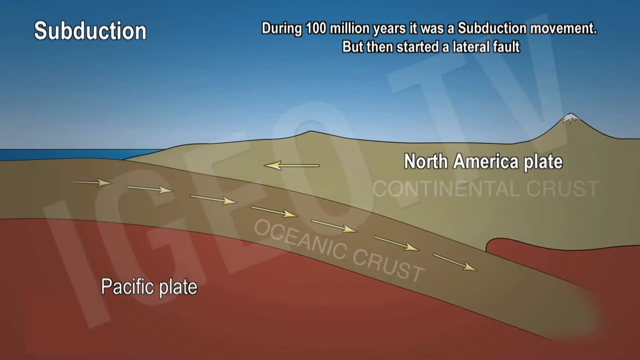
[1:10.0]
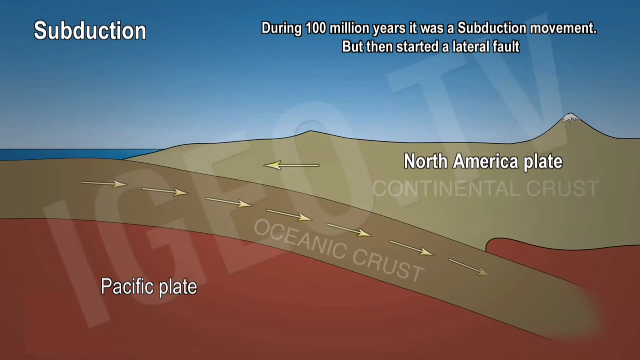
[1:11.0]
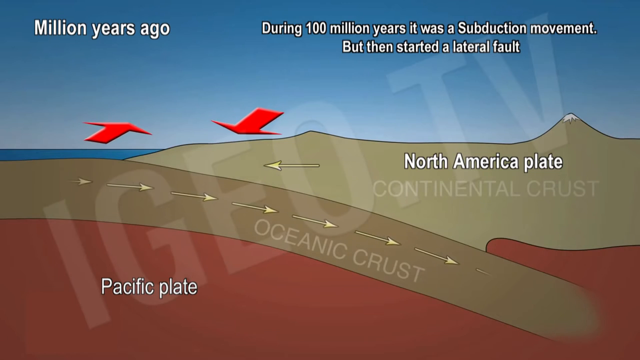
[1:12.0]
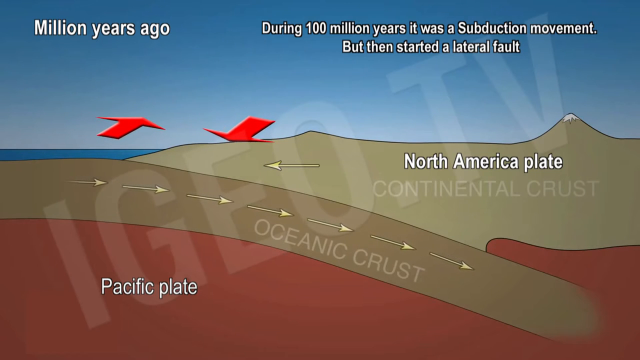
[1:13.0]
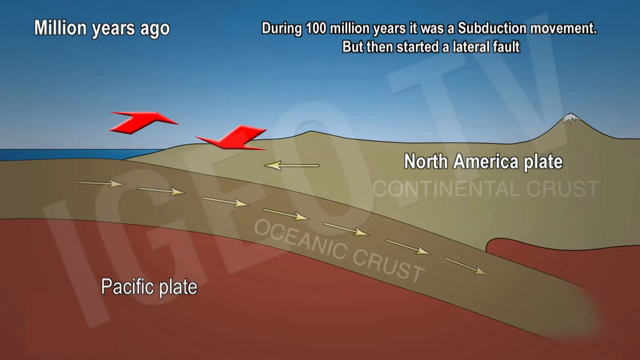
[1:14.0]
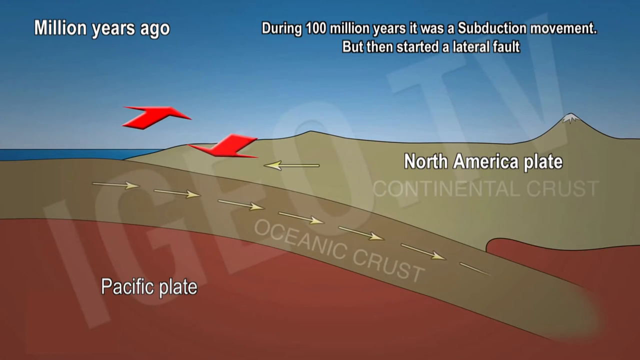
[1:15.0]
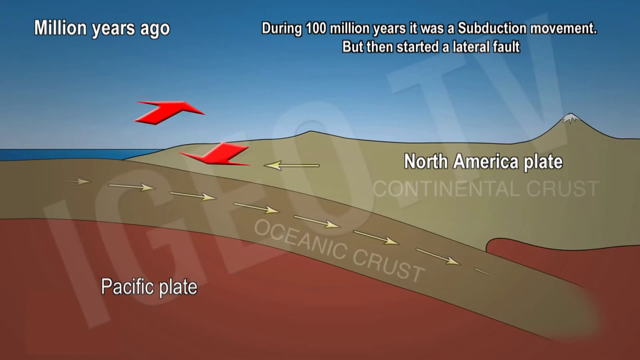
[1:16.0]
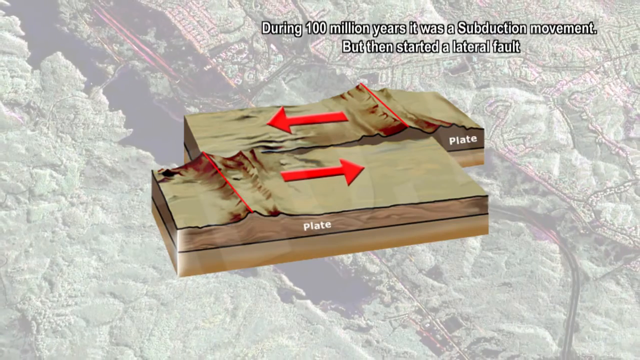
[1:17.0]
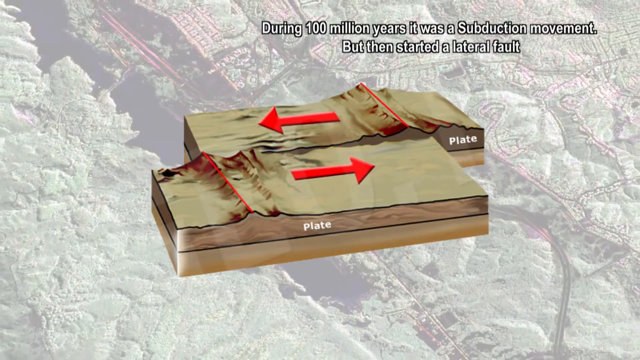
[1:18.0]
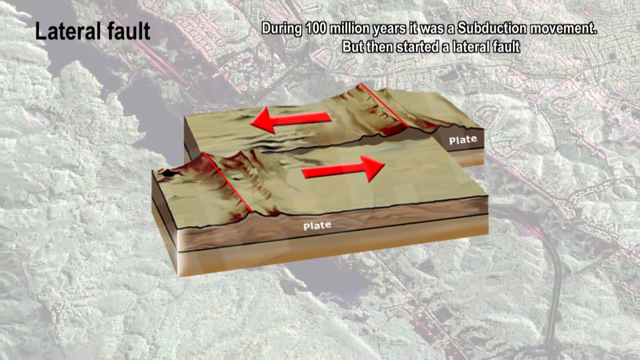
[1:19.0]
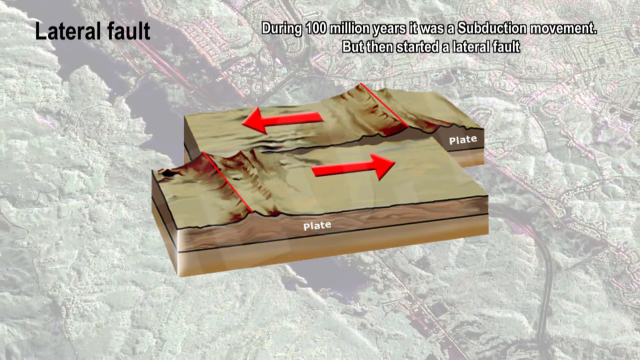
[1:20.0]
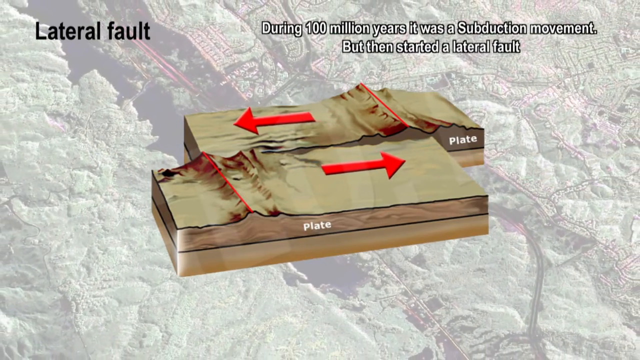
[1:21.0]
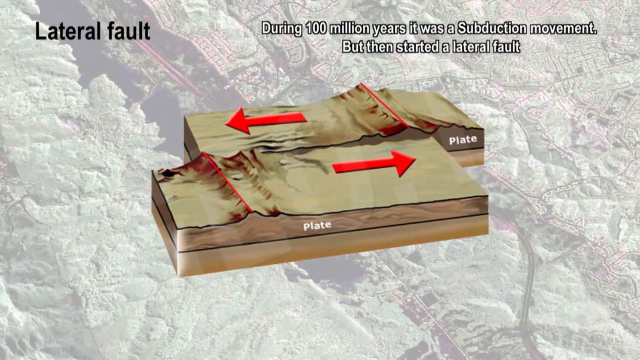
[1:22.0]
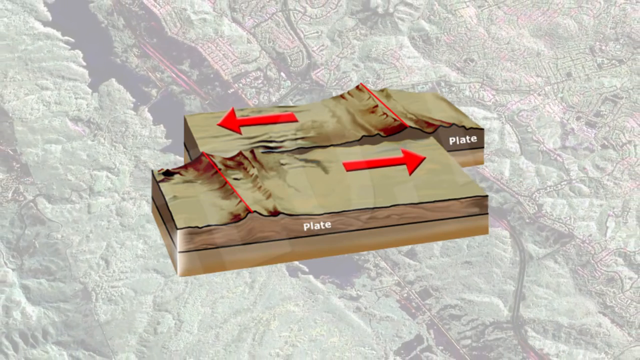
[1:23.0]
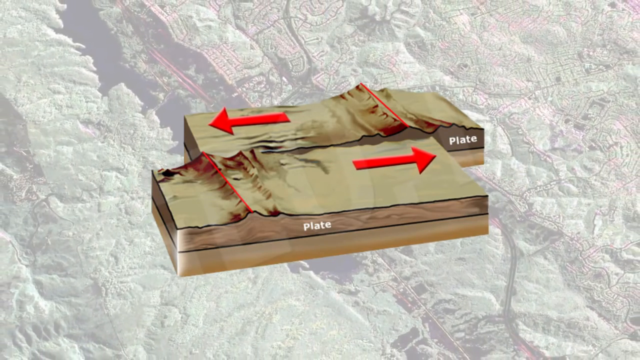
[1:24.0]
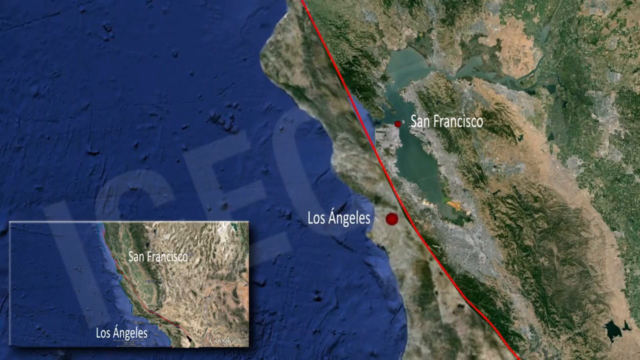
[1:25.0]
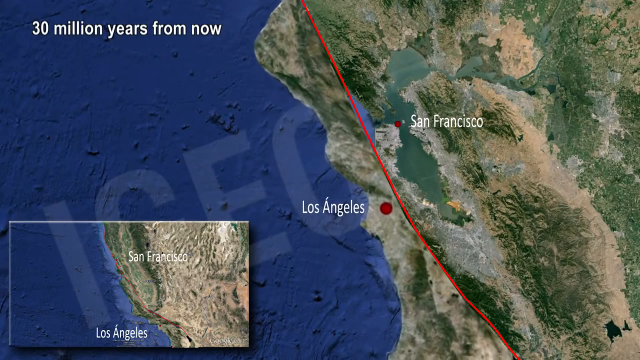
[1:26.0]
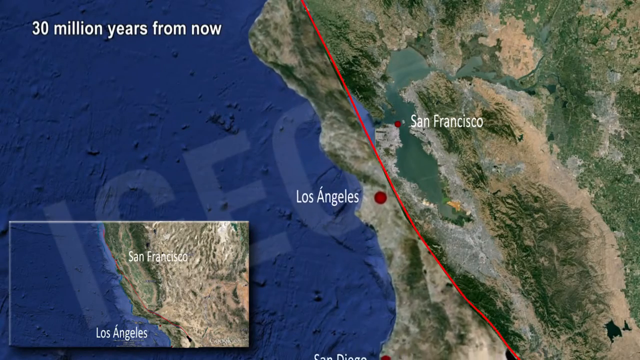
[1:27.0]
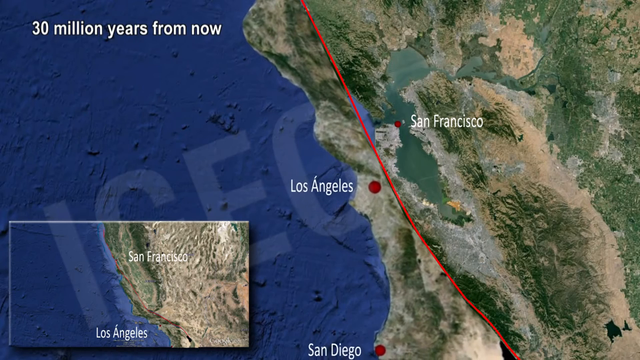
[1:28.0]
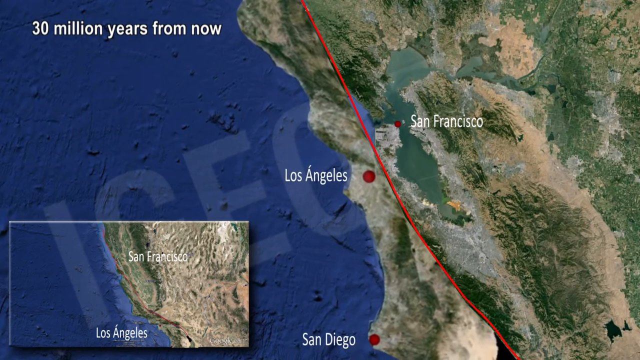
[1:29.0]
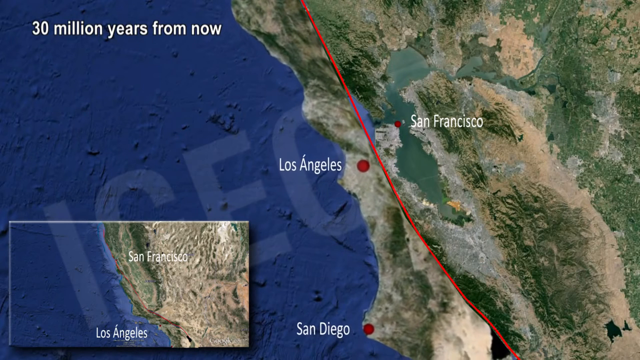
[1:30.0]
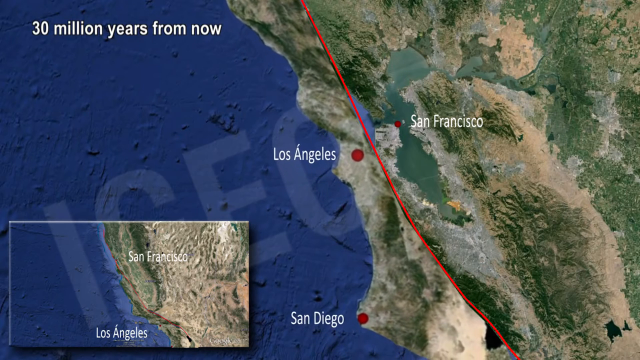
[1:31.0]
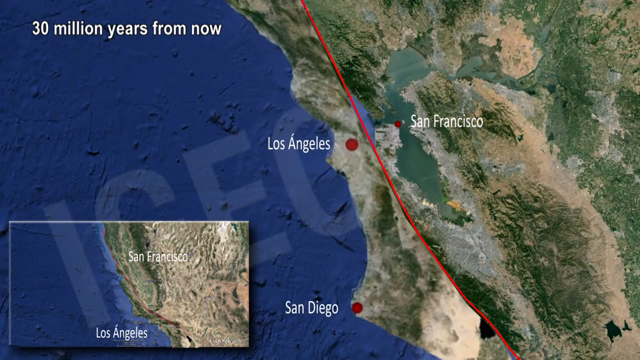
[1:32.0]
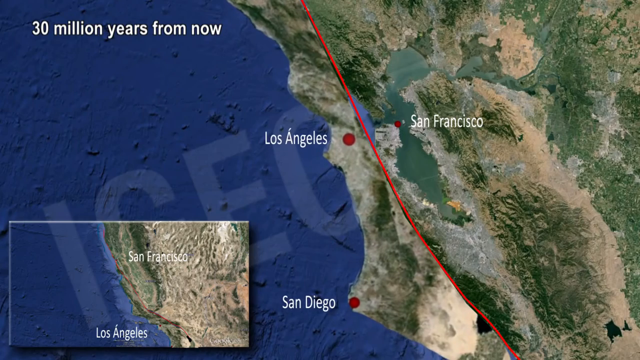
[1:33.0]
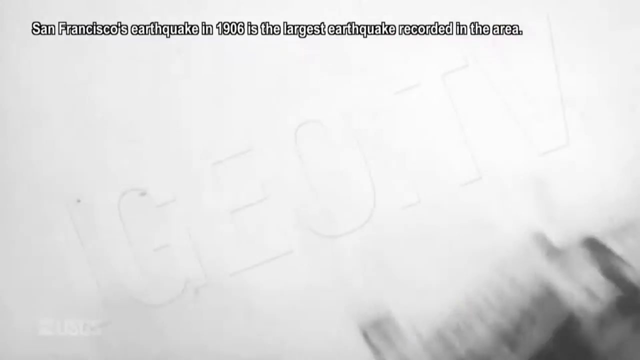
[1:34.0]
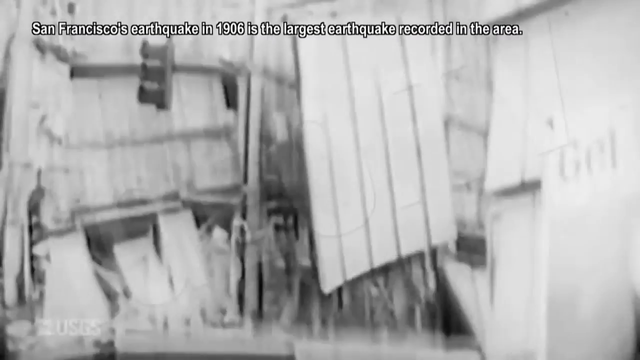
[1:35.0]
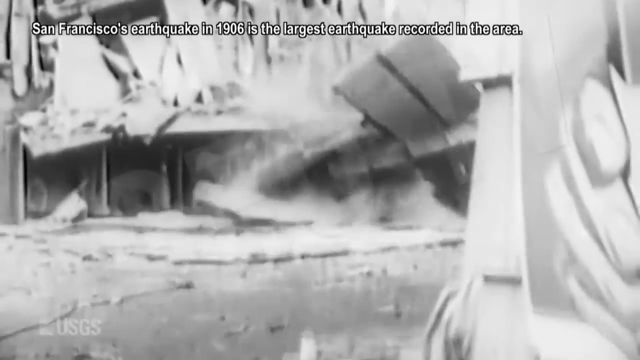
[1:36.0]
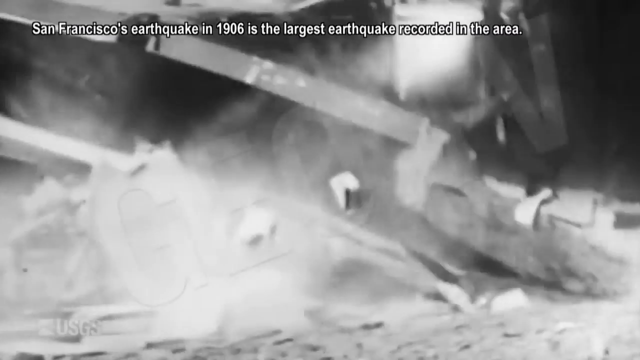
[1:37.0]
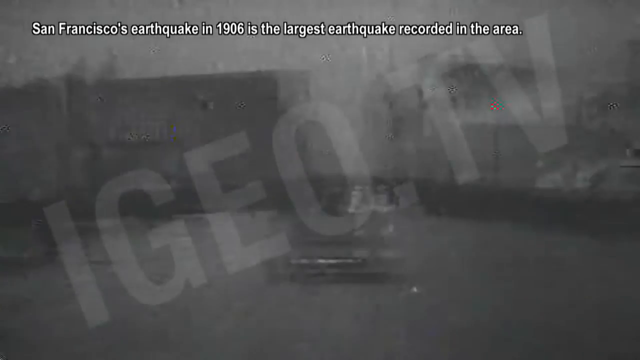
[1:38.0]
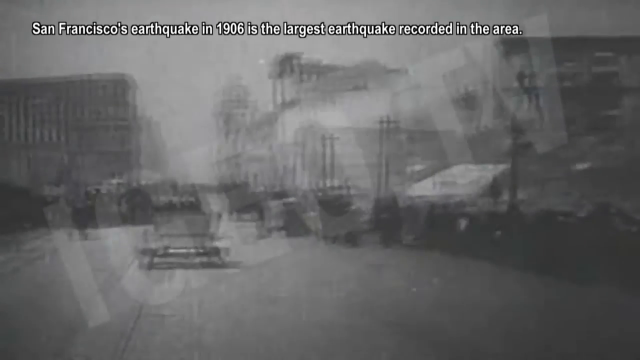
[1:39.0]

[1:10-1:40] A graphic shows subduction, with the oceanic crust and the Pacific plate going under the North American plate and the continental crust. Text reads "during 100 million years, it was a subduction movement, but then started a lateral fault." Two red arrows go past each other, showing the two plates moving past each other, superimposed on an aerial map of probably part of the San Andreas Fault that kind of looks like a housing tract area. California is then shown as if from space, with Los Angeles and San Francisco and how, 30 million years from now, the two cities will meet up, with San Diego where L.A. was. The video then turns to earthquakes in 1906.